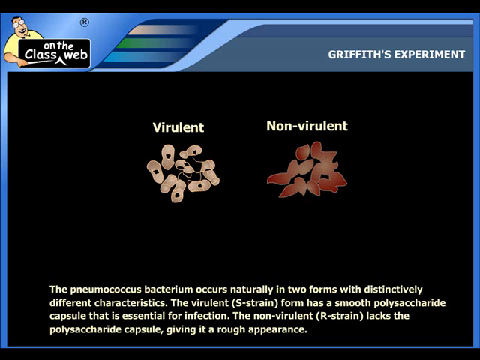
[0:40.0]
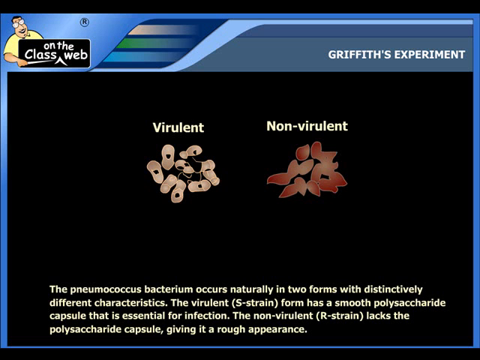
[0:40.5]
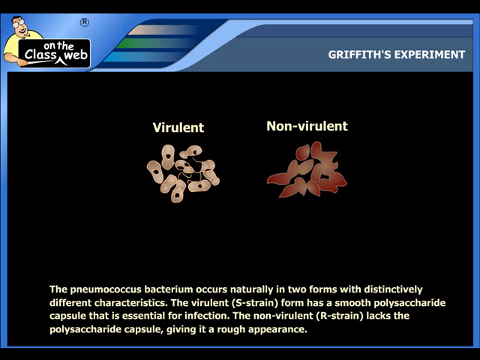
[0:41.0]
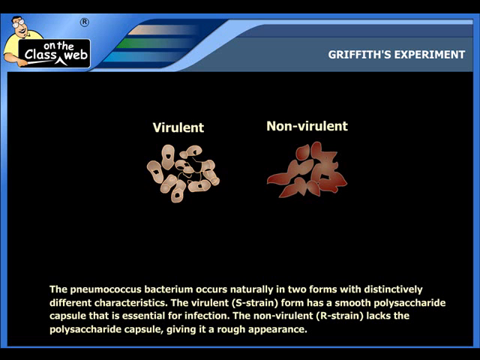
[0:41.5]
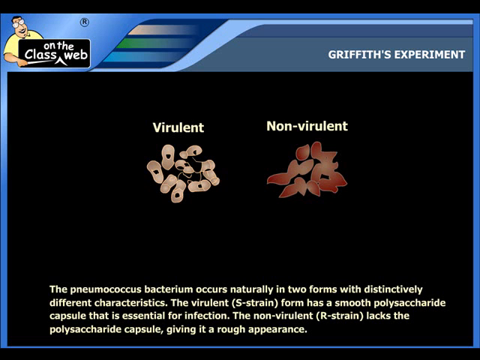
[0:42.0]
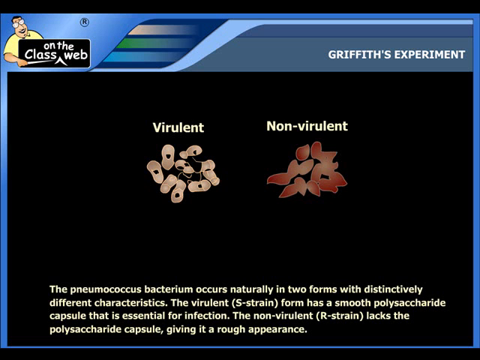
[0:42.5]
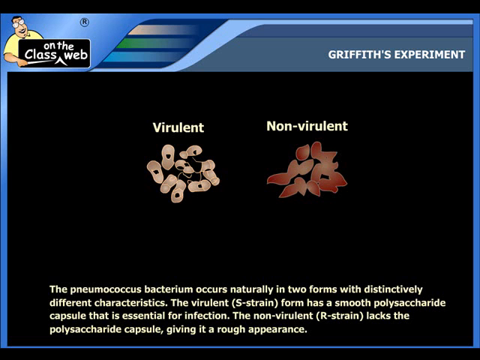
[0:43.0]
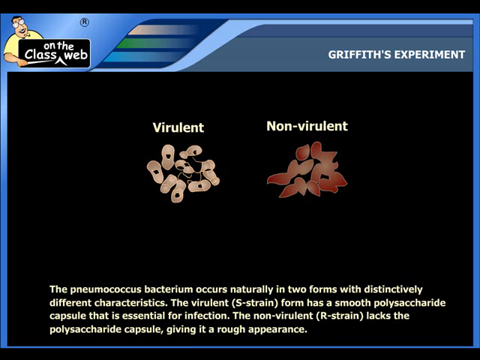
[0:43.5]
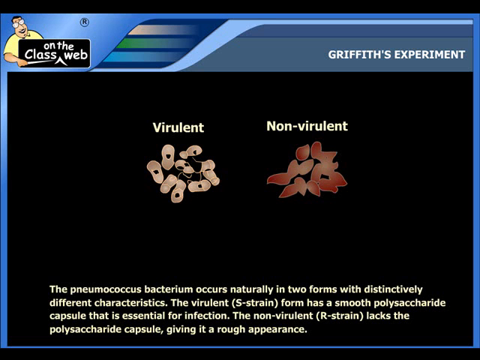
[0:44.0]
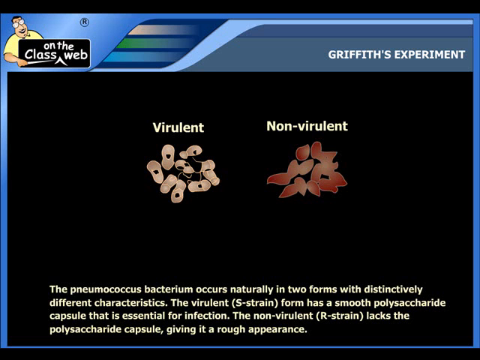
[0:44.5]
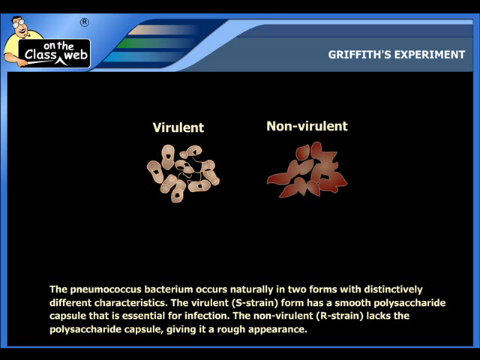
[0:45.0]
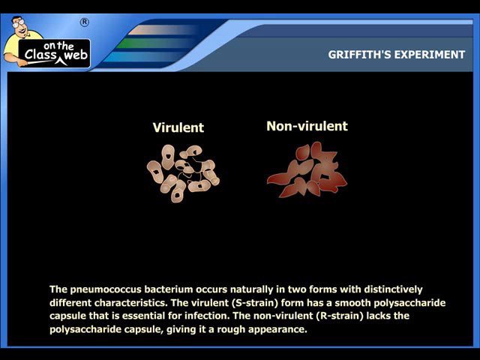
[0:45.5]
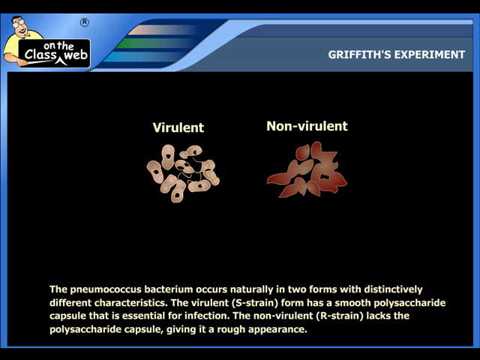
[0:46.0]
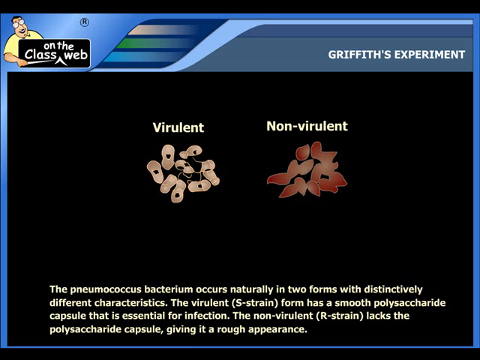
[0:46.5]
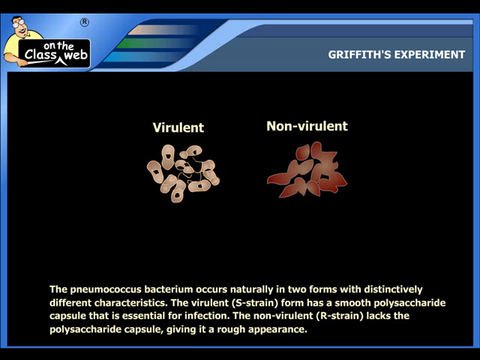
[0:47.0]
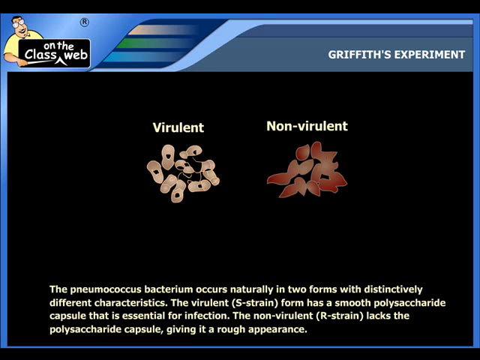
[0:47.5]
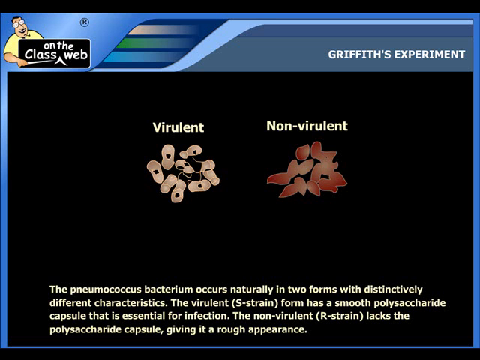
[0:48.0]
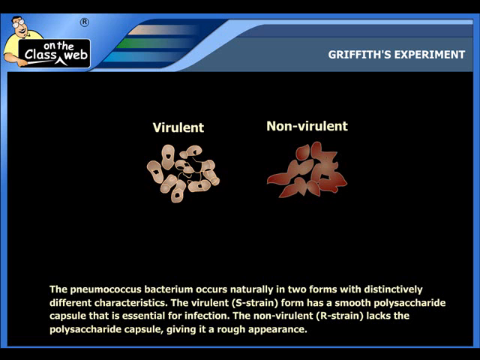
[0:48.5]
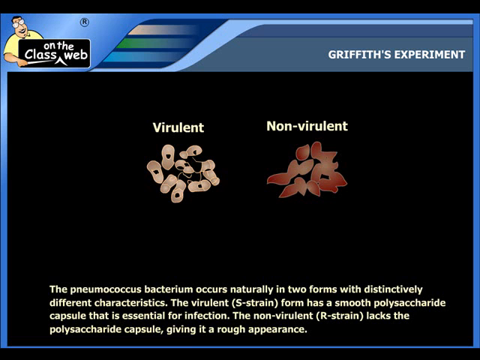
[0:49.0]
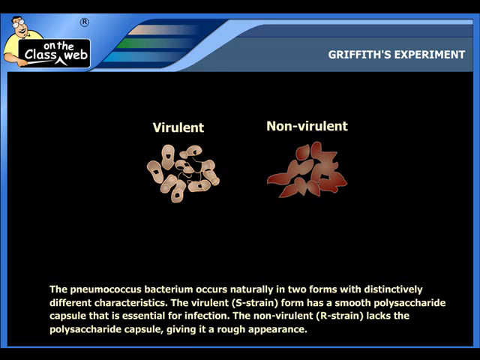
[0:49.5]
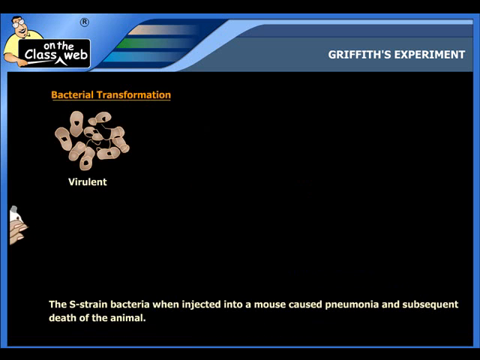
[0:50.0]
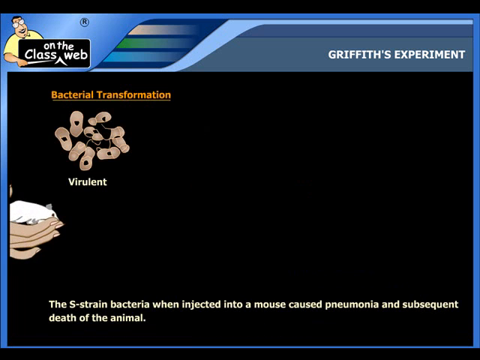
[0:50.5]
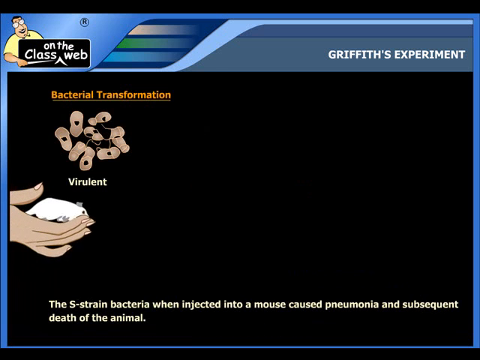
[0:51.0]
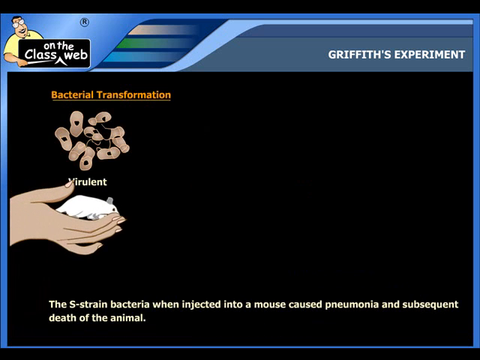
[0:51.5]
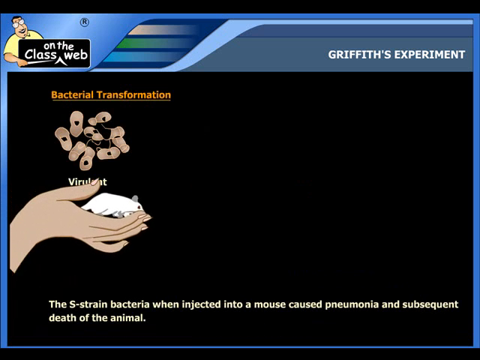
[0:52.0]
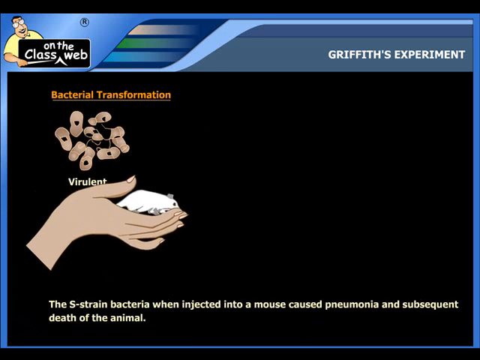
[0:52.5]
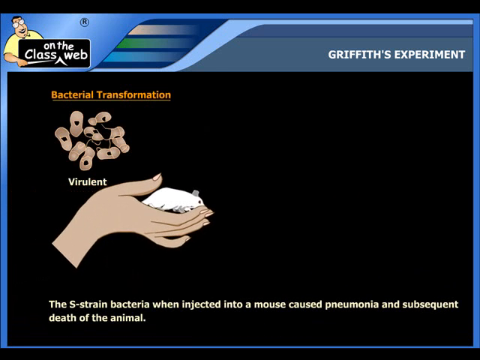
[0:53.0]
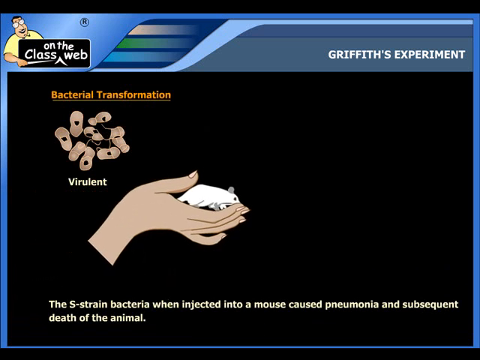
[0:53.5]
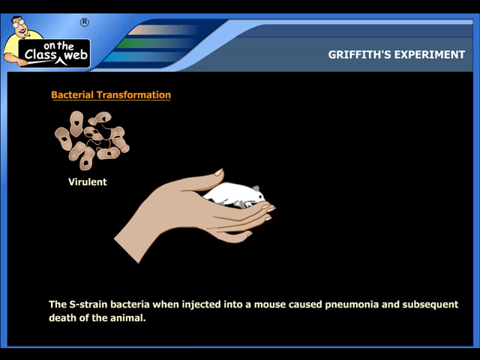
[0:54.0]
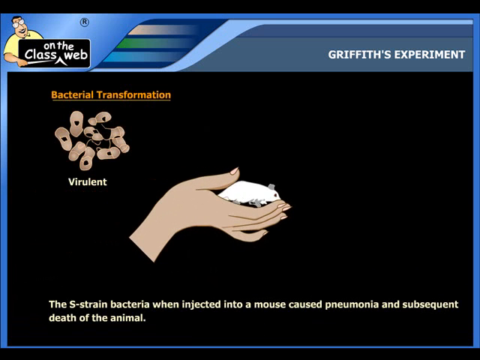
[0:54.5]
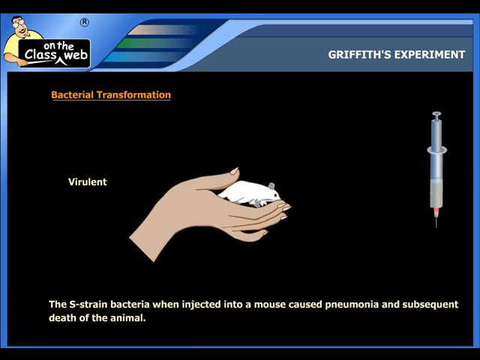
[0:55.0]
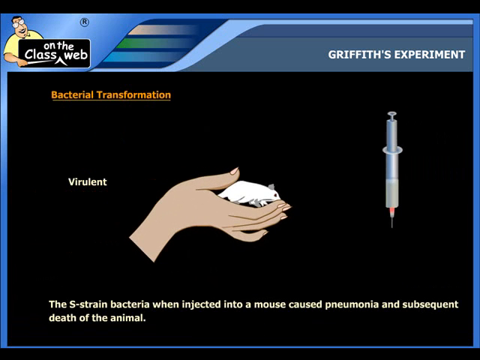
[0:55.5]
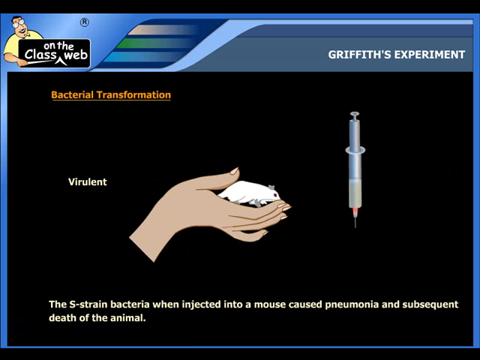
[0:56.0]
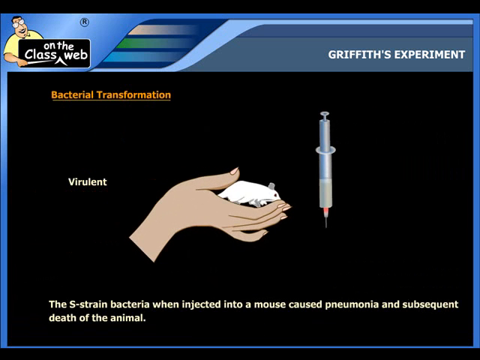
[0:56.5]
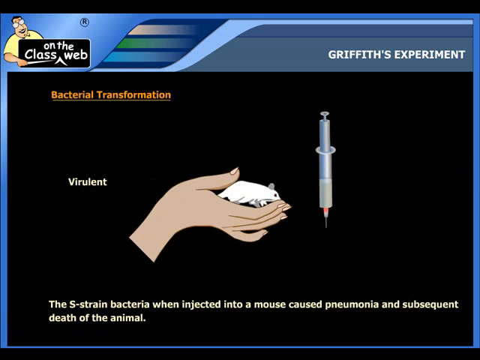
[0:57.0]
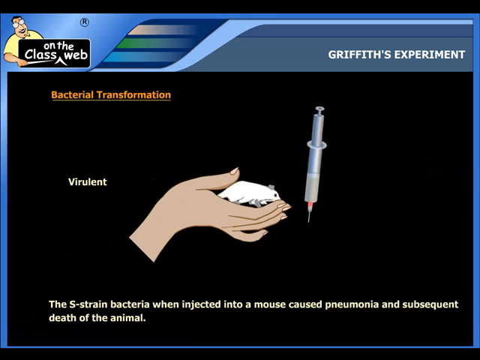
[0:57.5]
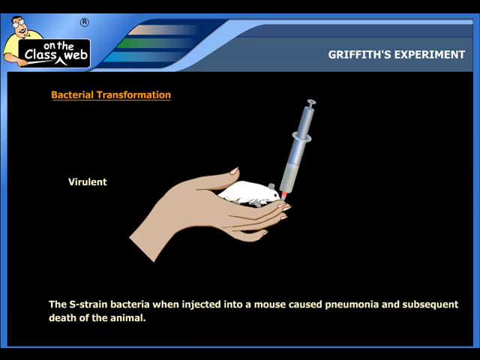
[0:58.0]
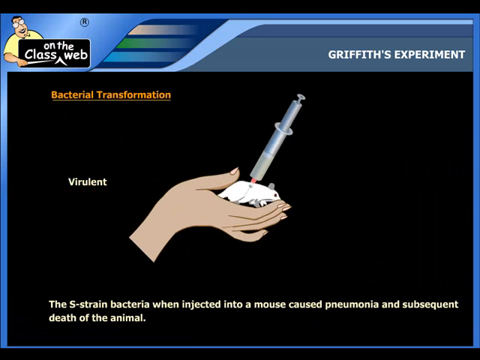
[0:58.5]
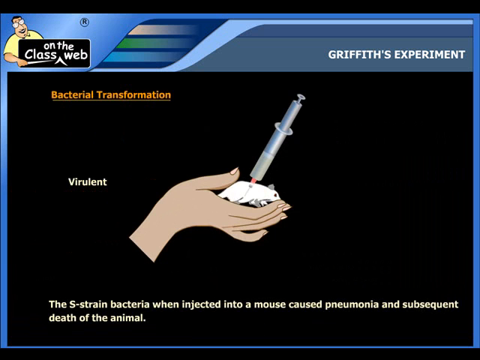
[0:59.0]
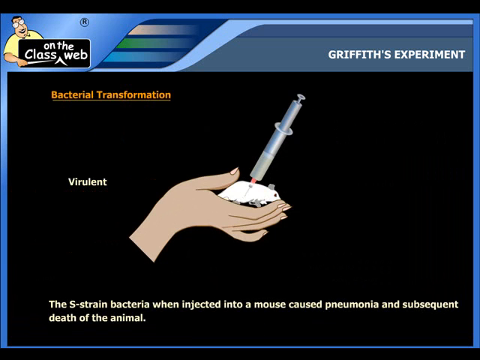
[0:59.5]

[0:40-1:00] In the upper left corner, a little cartoon man with a yellow shirt, black hair and glasses has a sign in front of him and a pointer in his right hand. The sign says "on the class web" in white letters on a black background. At the upper far right, white letters read "Griffith's Experiment." The screen now shows two types of bacteria, labeled "virulent" and "non-virulent"; their shapes look kind of like a peanut, and they are an off-red color. Text at the bottom says the bacteria "occurs naturally in two forms with distinctively characteristics. The virulent S strain form has a smooth polysaccharide capsule that is essential for infection. The non virulent R strain lacks the polysaccharide capsule, giving it a rough appearance."